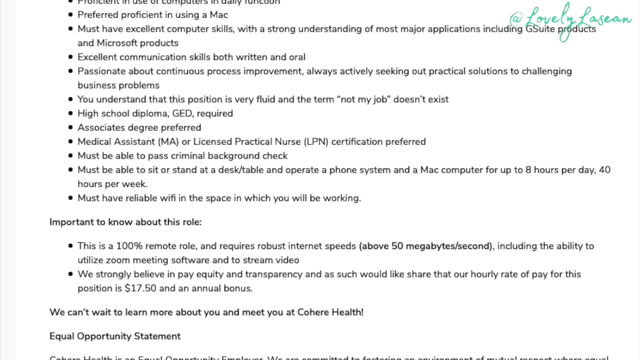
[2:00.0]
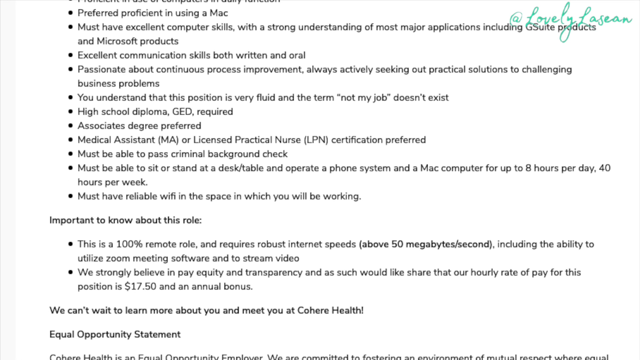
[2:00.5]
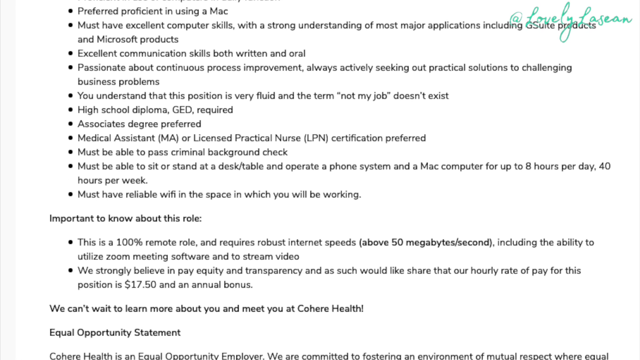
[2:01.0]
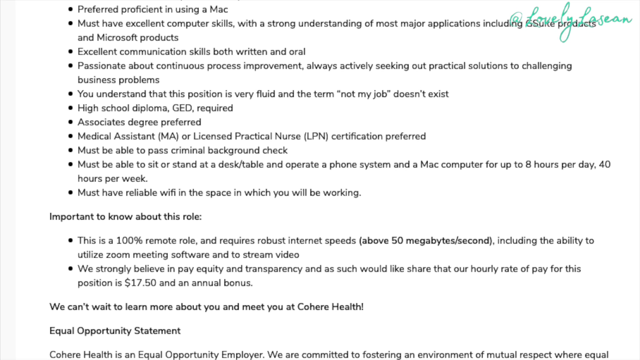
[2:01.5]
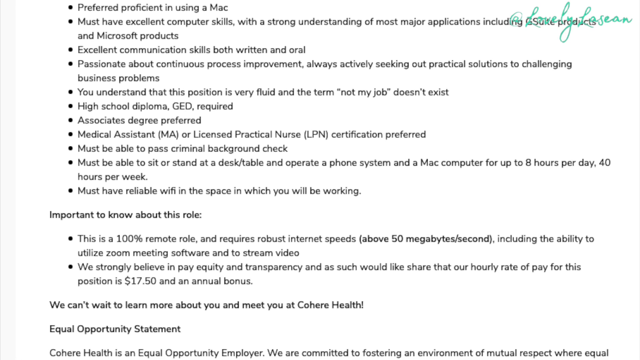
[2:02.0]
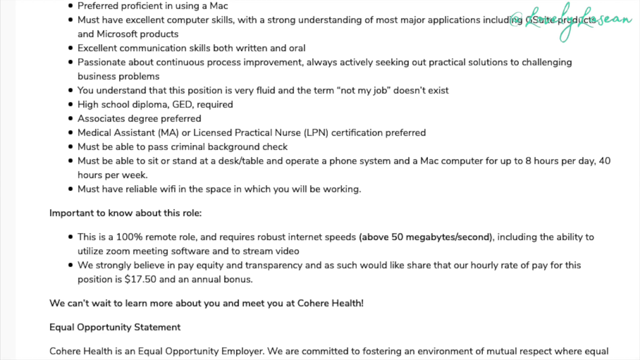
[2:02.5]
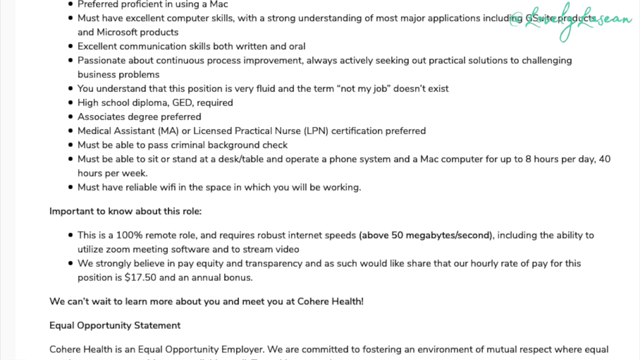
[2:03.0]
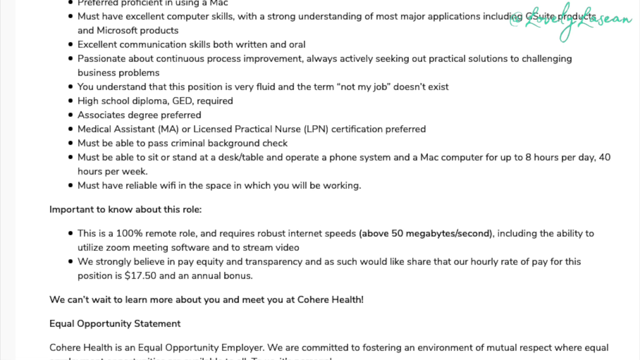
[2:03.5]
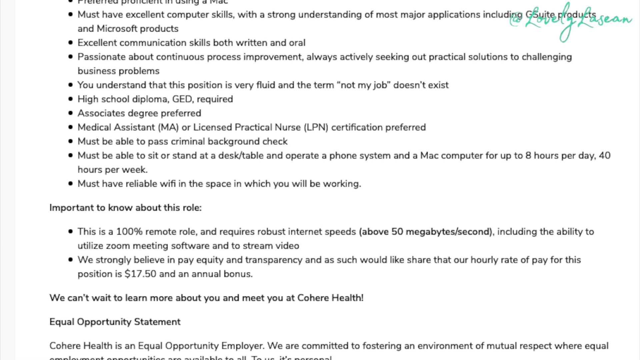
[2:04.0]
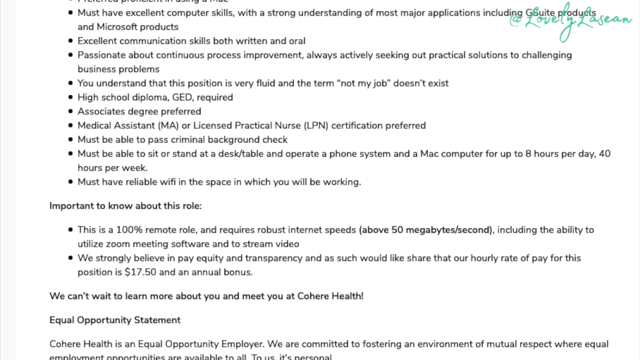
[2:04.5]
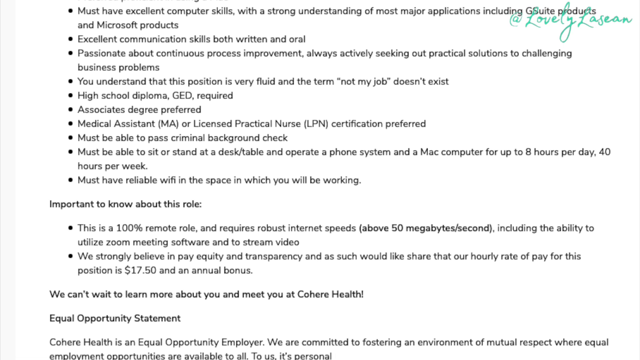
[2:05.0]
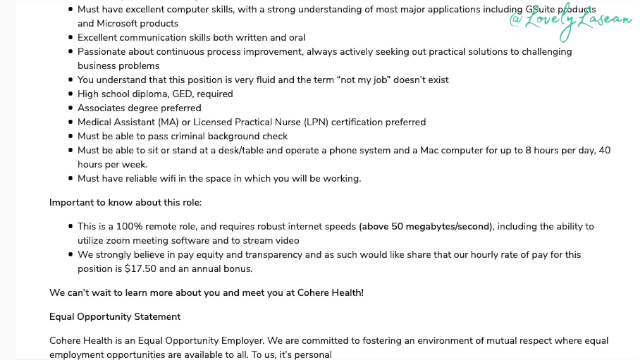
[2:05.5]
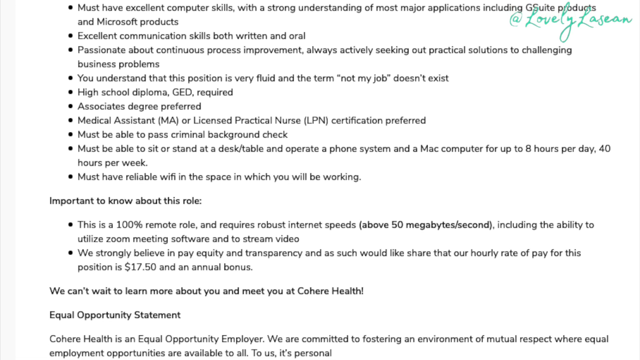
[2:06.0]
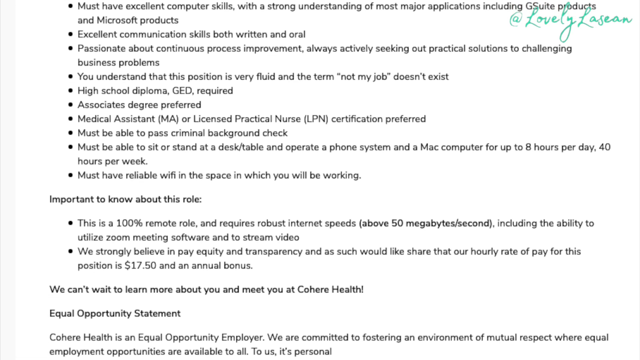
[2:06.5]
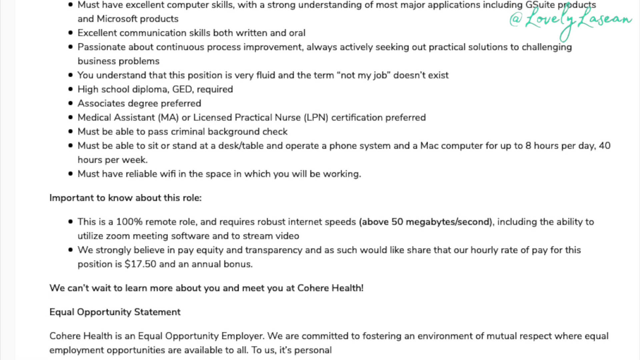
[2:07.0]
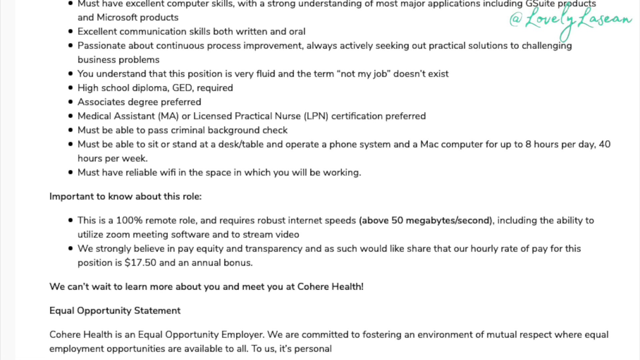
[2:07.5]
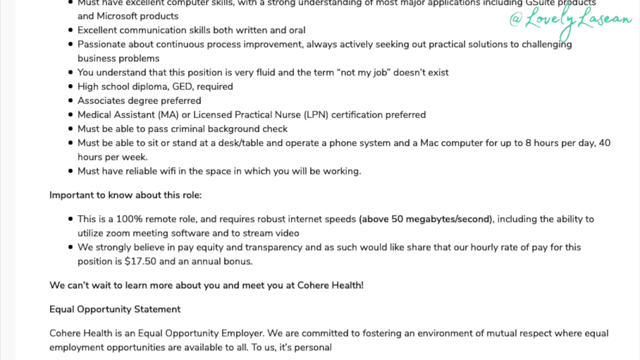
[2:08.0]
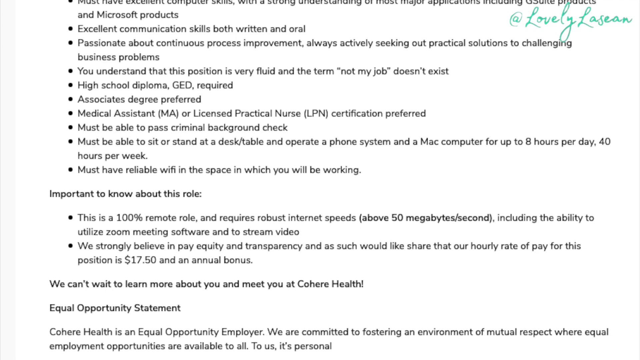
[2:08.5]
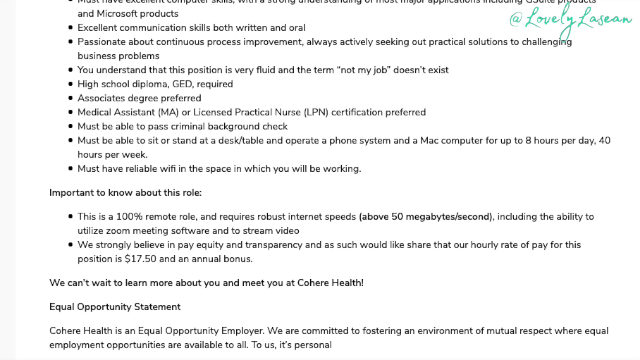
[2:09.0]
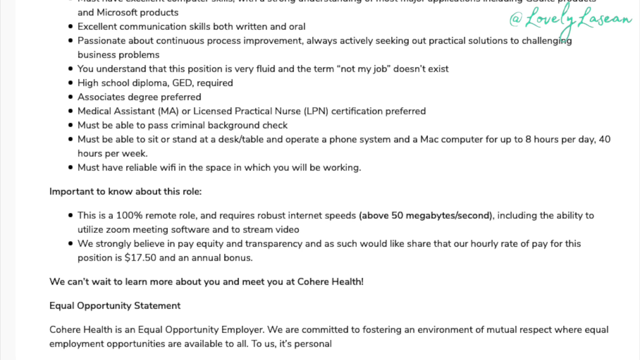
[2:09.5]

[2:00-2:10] The ad is for a product, and it also seems aimed at people who want to work remotely, since the phone screens show "remote job leads and side hustles", apparently suggesting the product can be resold through the company. The woman holds the skincare product. Next comes a company website with "in tech specialist" written on it, apparently looking for specialists. It shows a company overview with points listed under it, then an opportunity overview with more points. On the left side there is a red button reading "apply now", apparently for starting an application, possibly as a distributor. The next page says "what will you do" and lists everything to be done, followed by "your competencies" listing all the expected competencies. The ad apparently seeks distributors to join the team.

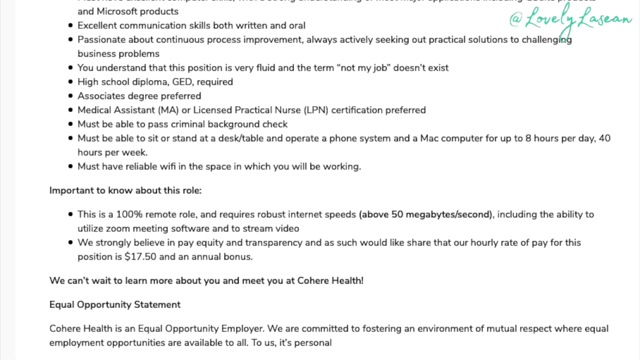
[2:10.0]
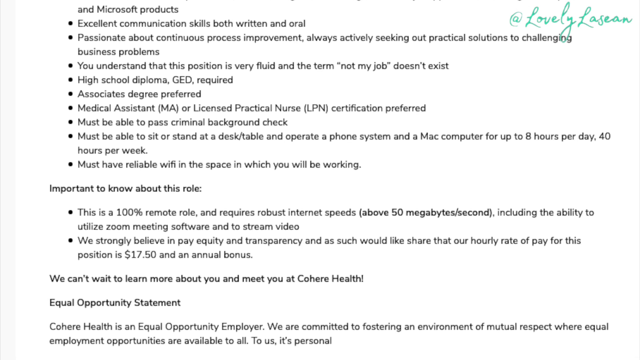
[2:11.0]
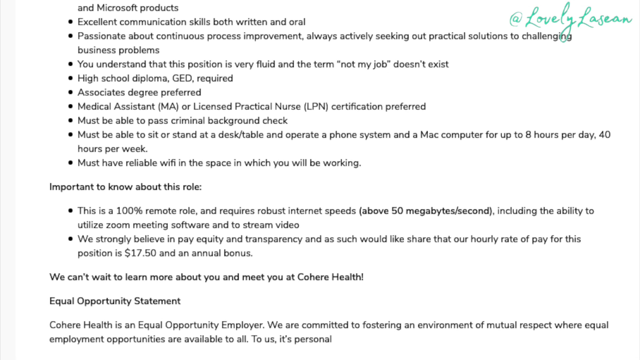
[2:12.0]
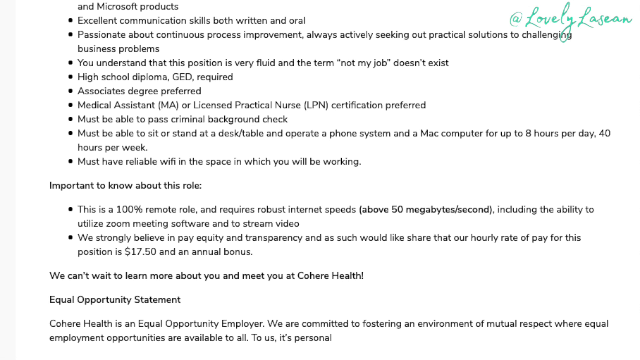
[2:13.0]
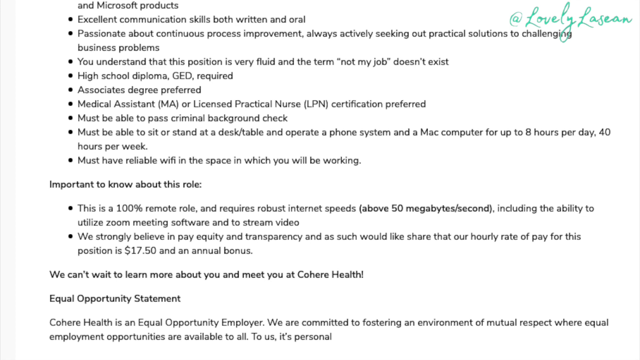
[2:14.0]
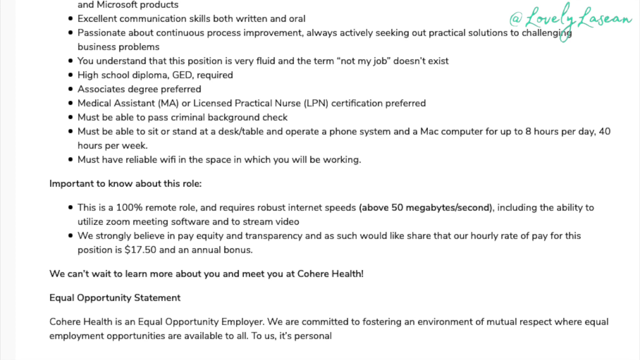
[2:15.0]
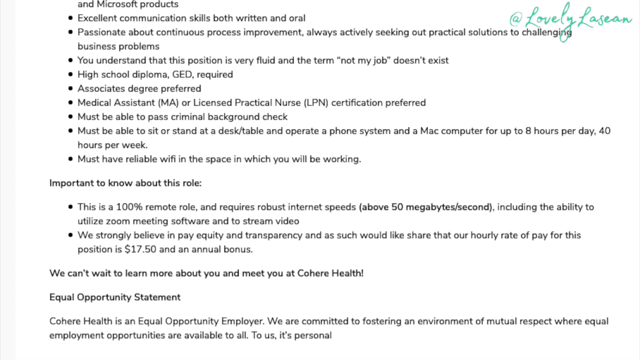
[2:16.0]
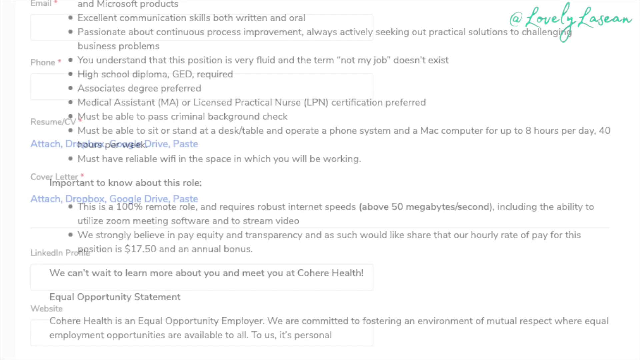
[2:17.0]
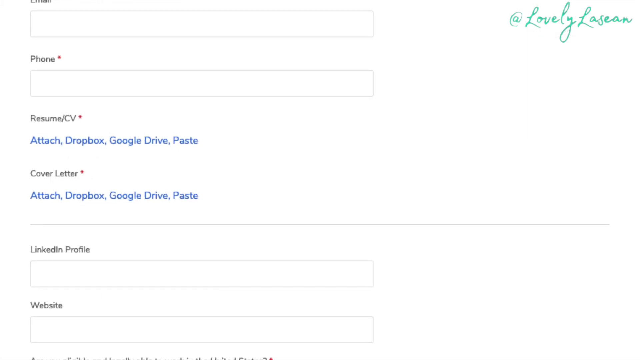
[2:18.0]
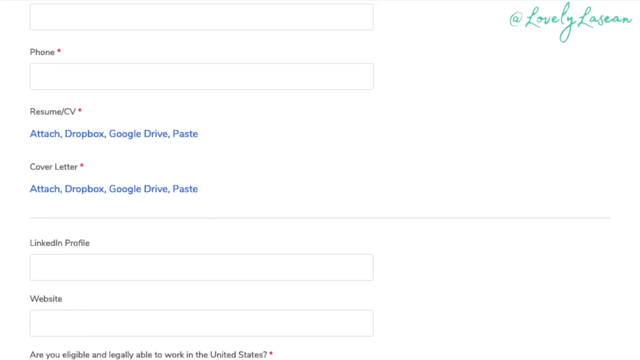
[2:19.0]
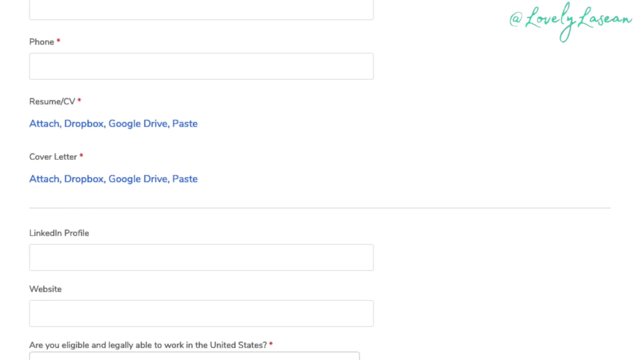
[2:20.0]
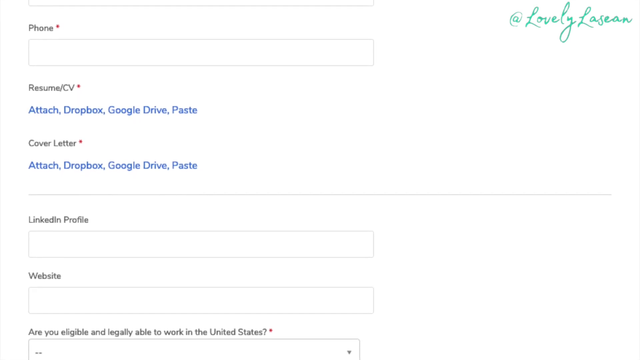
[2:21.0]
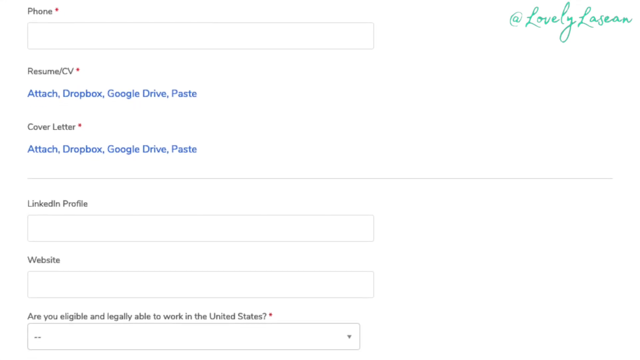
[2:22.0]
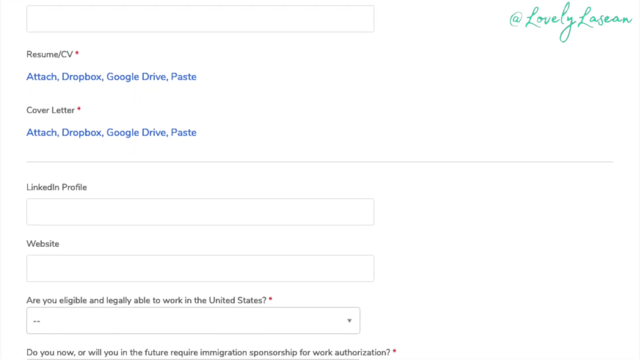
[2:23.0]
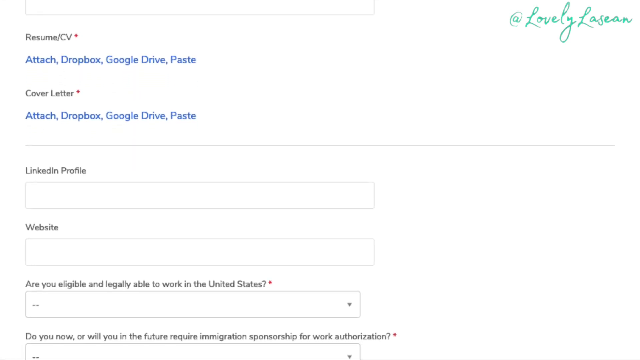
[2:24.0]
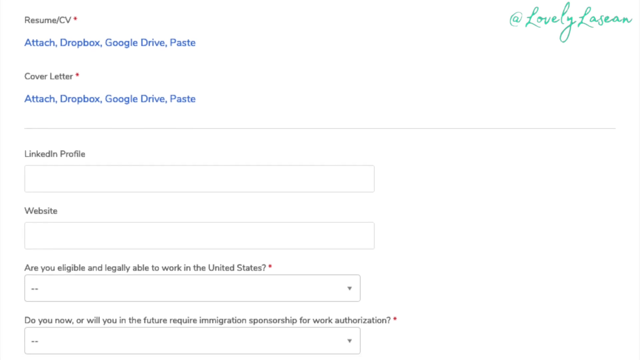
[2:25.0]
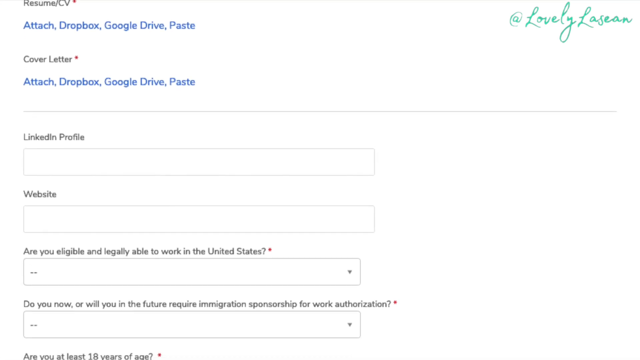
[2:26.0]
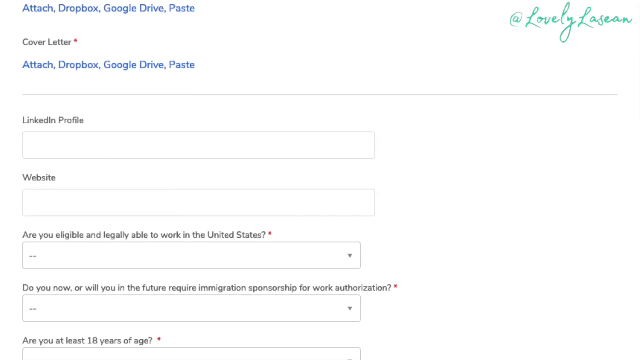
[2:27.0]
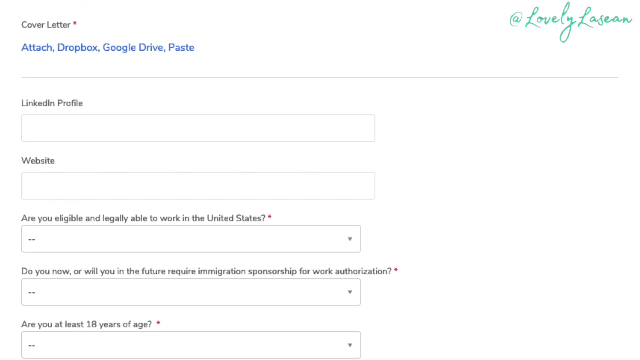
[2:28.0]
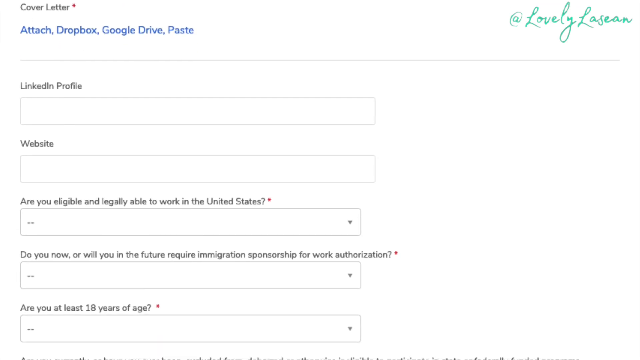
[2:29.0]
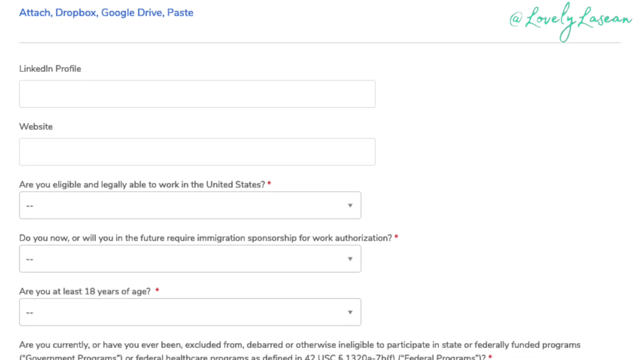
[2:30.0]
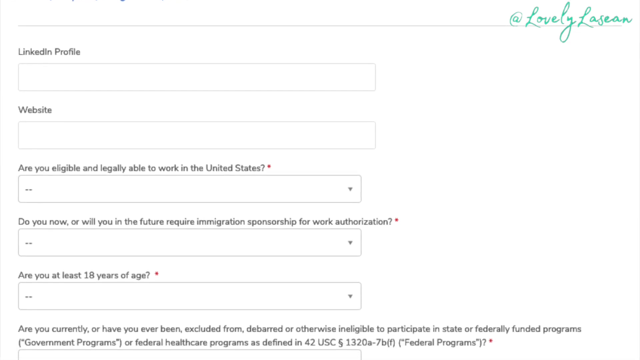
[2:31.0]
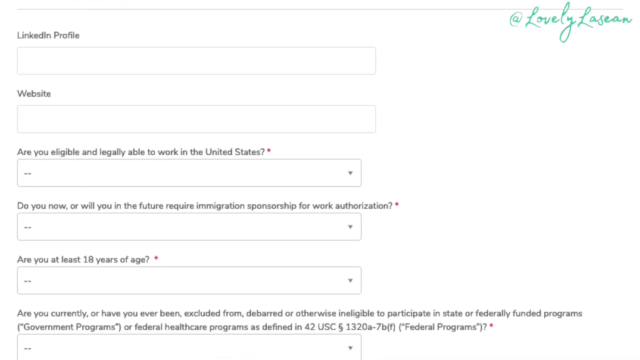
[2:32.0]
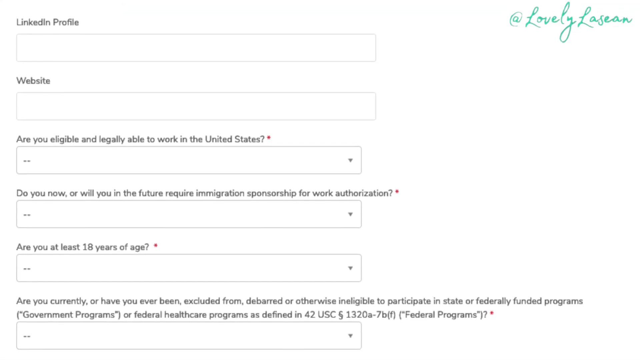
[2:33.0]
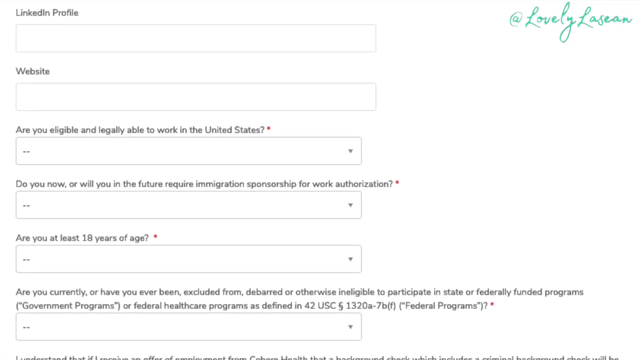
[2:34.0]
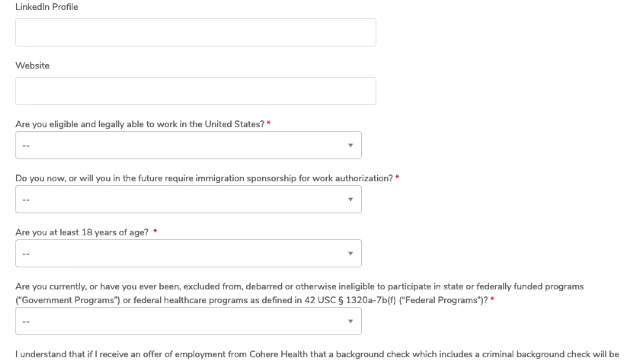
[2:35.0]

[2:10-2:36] At the beginning of the ad, a woman advertises a product. She wears three different dresses: a green dress, a brown dress and an orange dress. In the orange dress her shoulder is open, showing her tattoo. She has long brown hair and silver earrings. She holds the skincare product in her hand, raising it up. The next page shows the company name, the company overview and the opportunity overview; they are looking for people to join as a specialist or a distributor. On the left there is a red button reading "apply here", apparently for starting an application. The next page says "what will you do?" and shows what the person will do, along with the company, your achievements and your background, and what they expect from applicants. They are looking for someone with three years of customer service experience. All the specs are written on the third page.